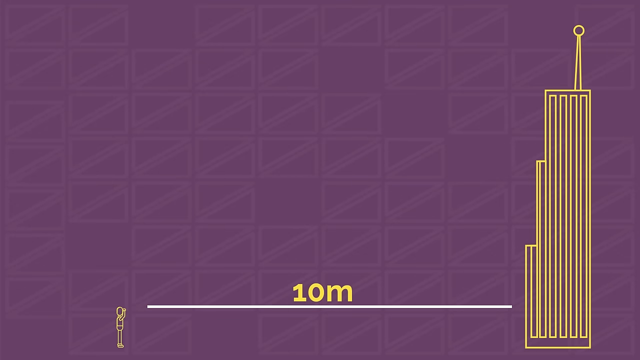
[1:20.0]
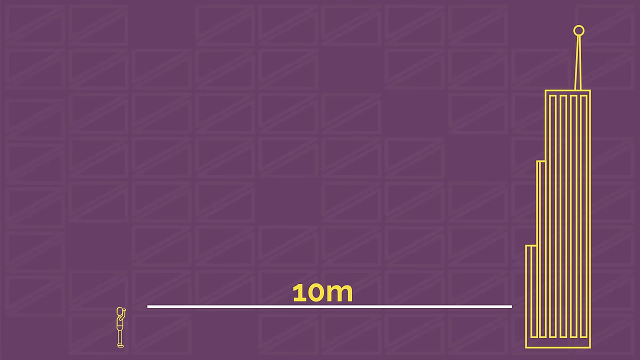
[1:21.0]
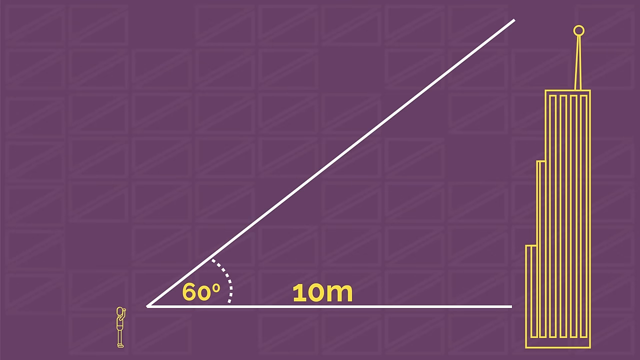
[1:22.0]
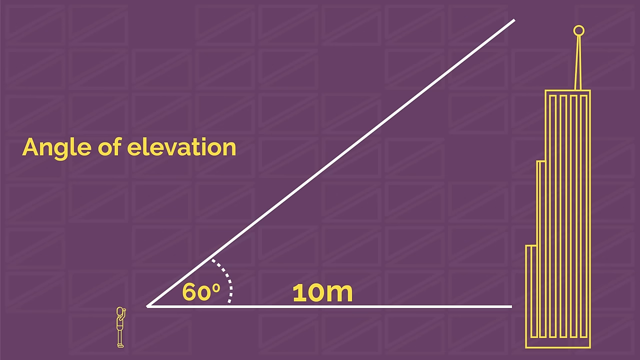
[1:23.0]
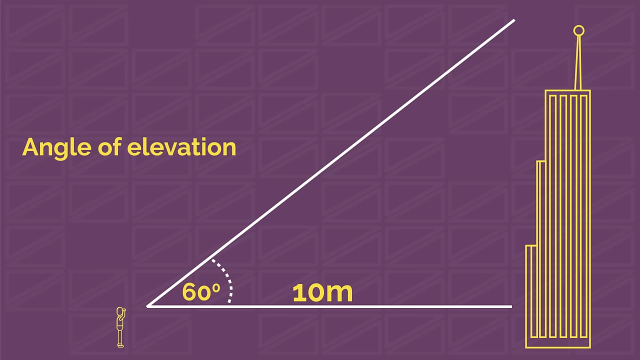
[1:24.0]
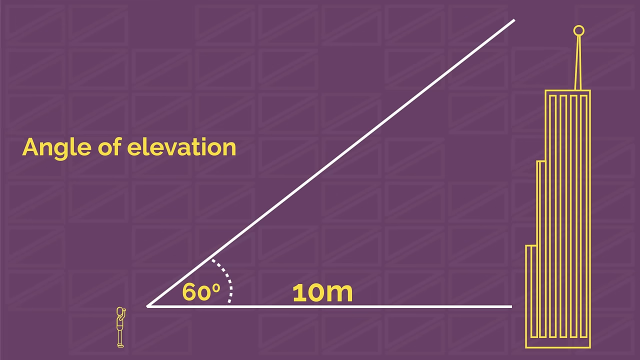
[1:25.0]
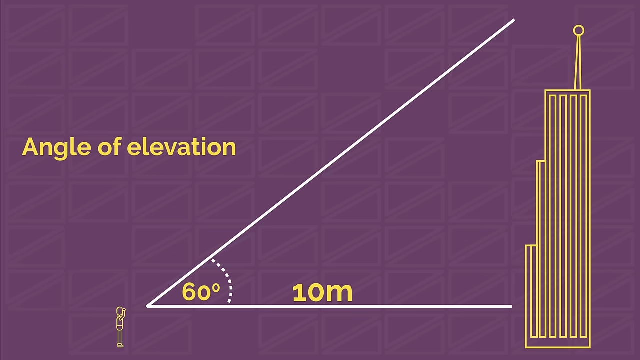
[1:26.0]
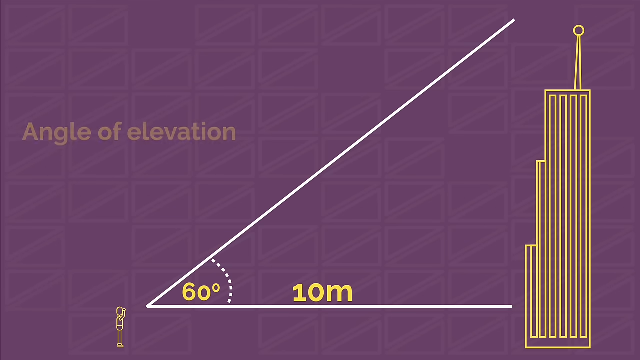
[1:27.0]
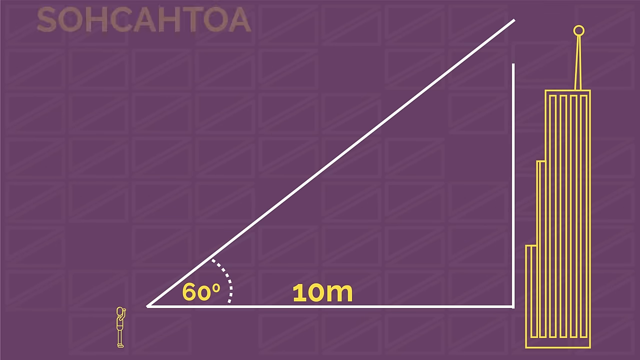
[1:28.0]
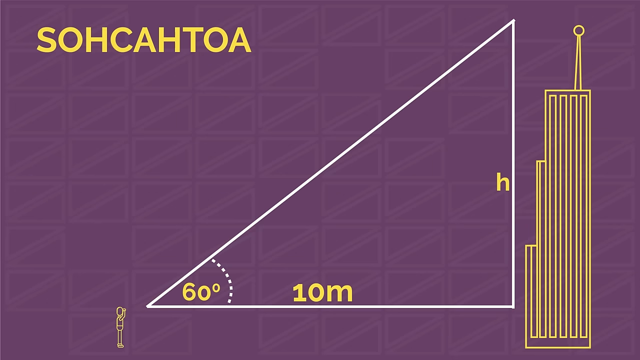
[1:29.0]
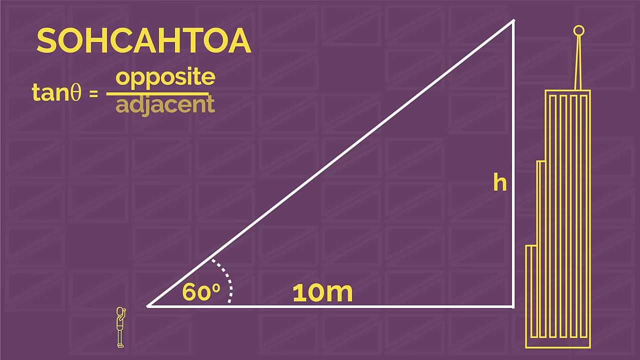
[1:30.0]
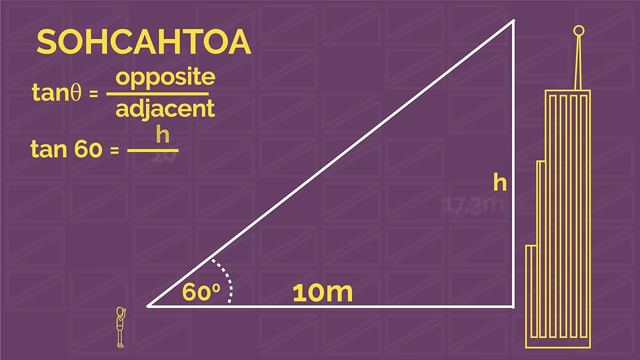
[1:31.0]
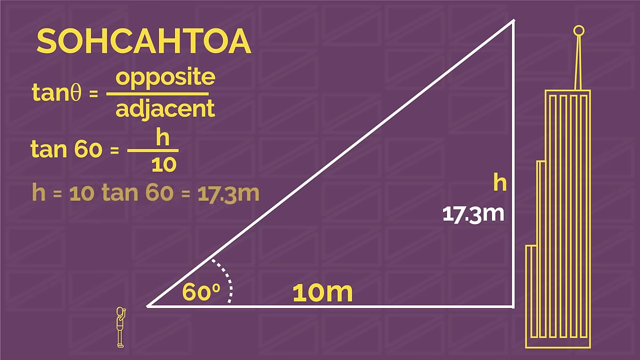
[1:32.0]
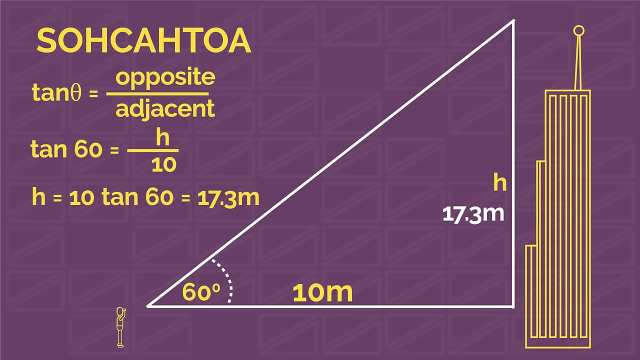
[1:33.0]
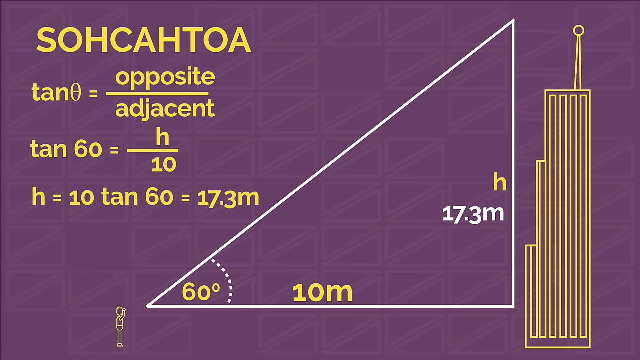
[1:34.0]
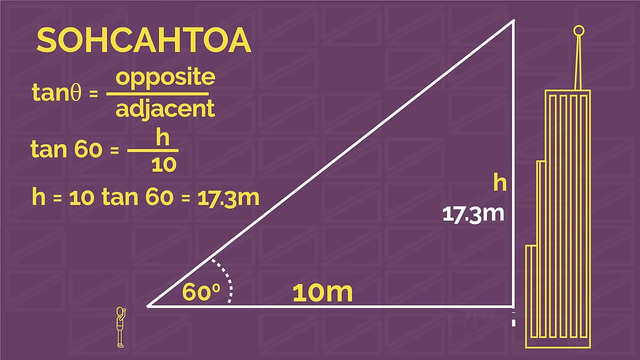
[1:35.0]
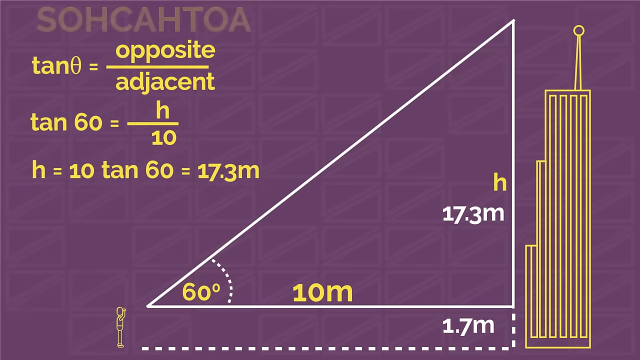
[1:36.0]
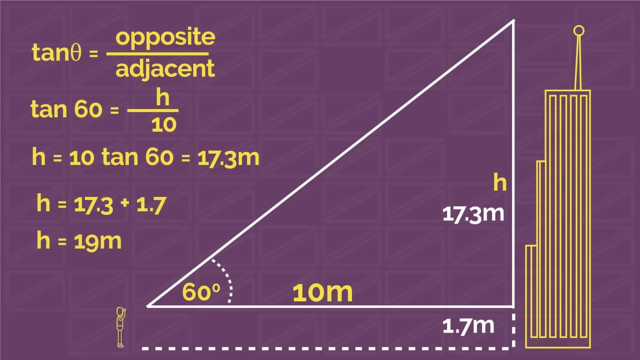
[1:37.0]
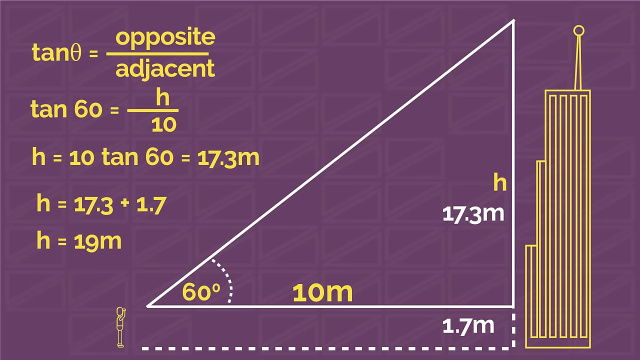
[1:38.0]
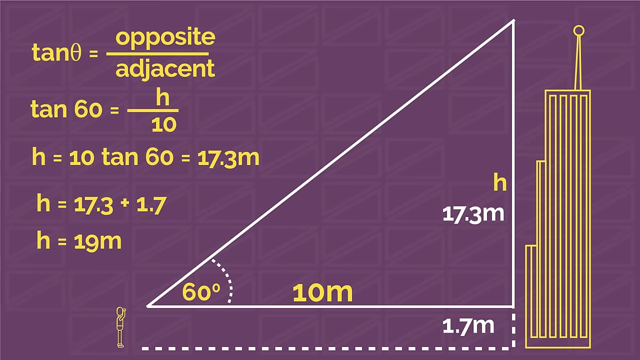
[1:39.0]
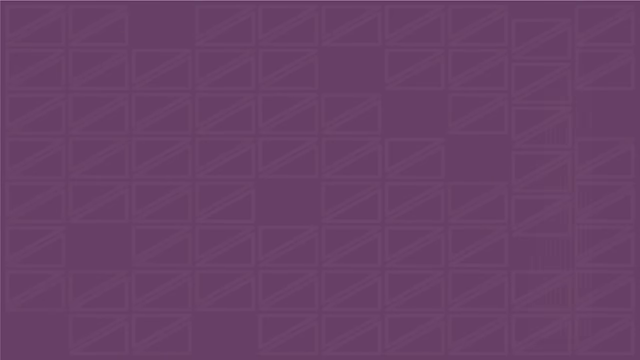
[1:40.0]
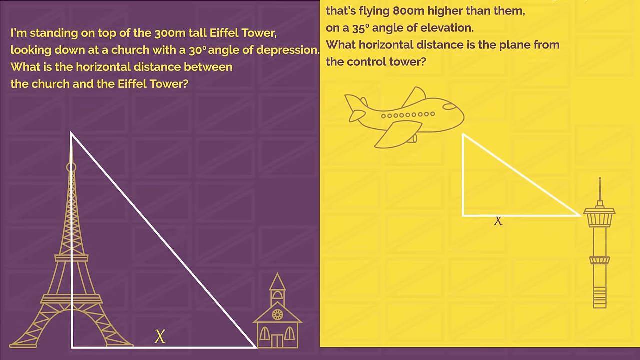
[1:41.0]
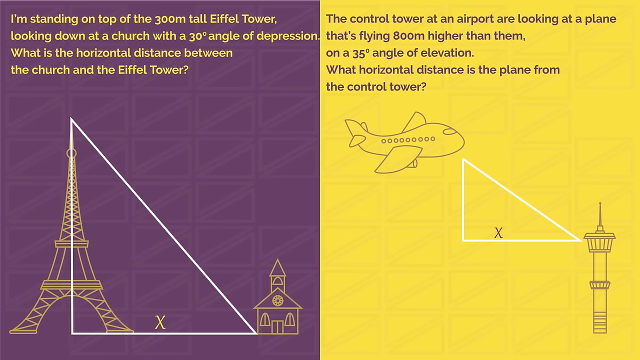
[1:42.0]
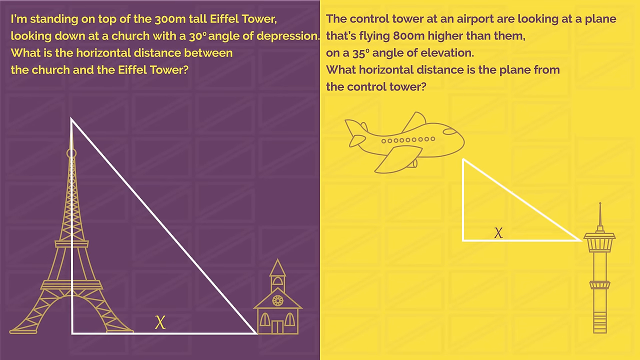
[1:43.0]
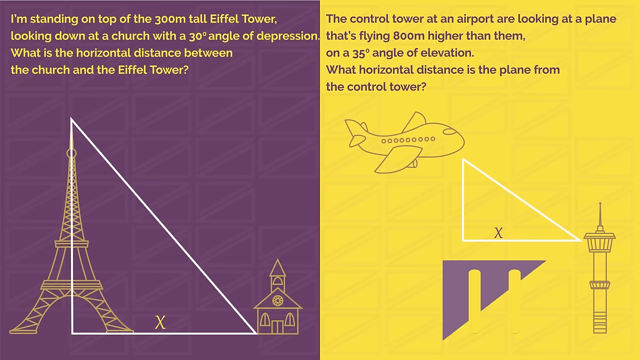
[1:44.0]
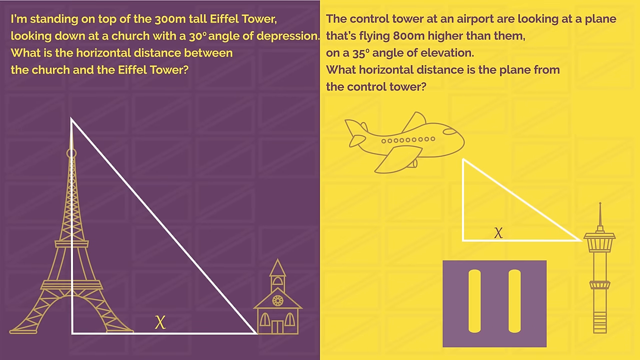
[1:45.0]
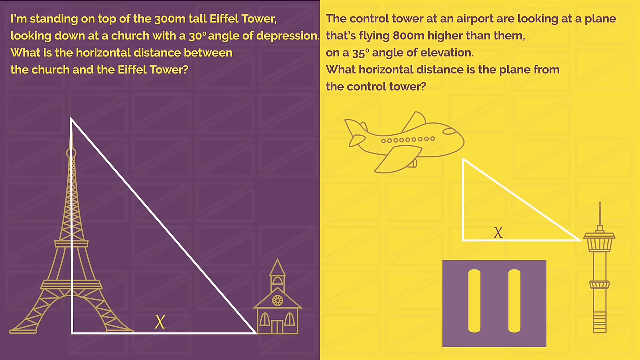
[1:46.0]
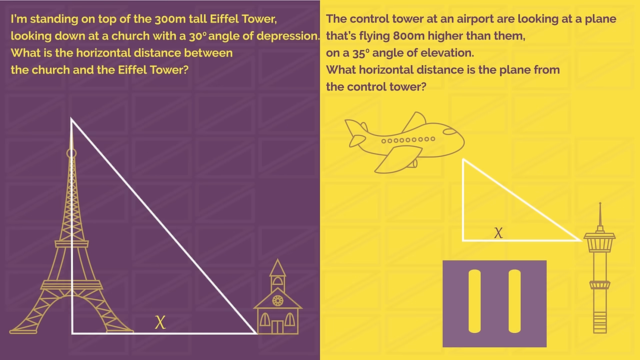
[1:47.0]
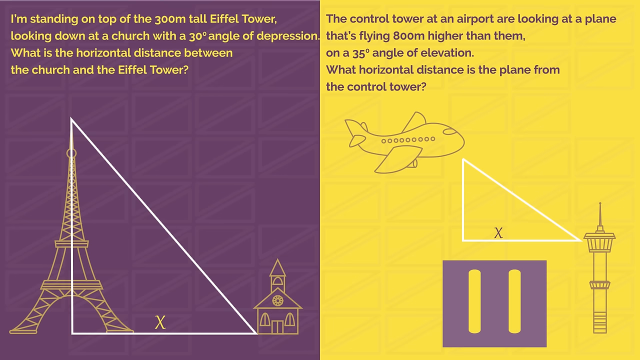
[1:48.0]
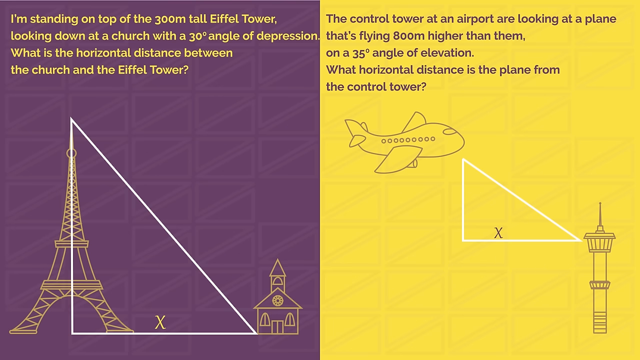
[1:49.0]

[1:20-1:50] On the purple background, a yellow outline drawing of a tower with an antenna on top appears on the right, and a tiny figurine of a man stands on the left. A white line goes from him to the tower, labeled "10m." Another white line goes from him to the top of the tower, with the angle marked as 60 degrees and a label above it reading "angle of elevation." The "angle of elevation" text fades, and the right side of the triangle is drawn in with a white line. "SOHCAHTOA" appears in the upper left. The far right side of the triangle is labeled with the letter "H," and under it appears "17.3 meters."